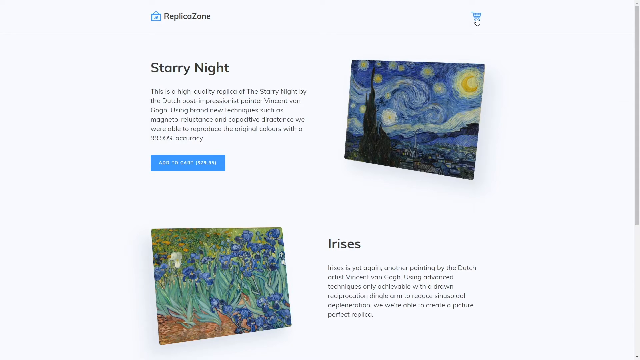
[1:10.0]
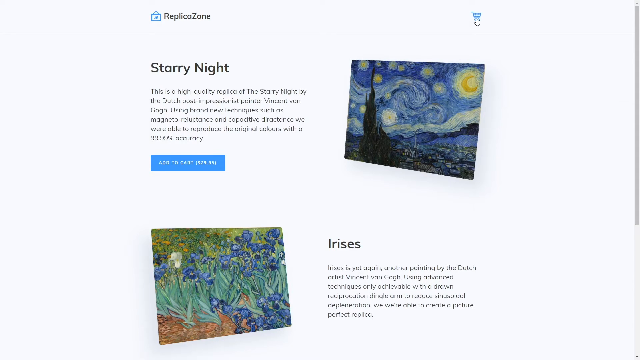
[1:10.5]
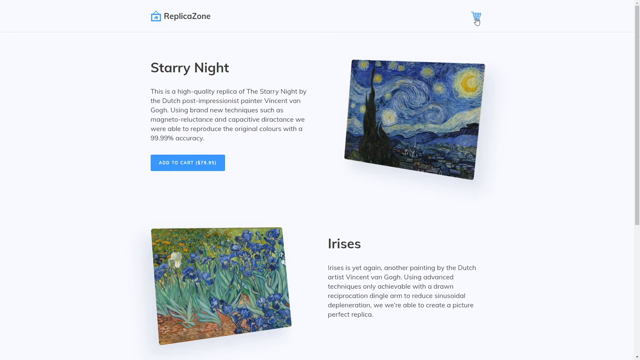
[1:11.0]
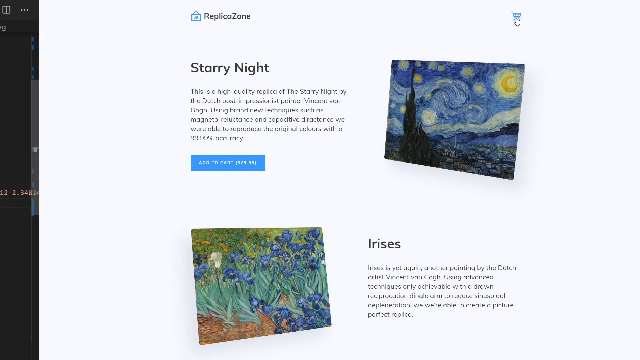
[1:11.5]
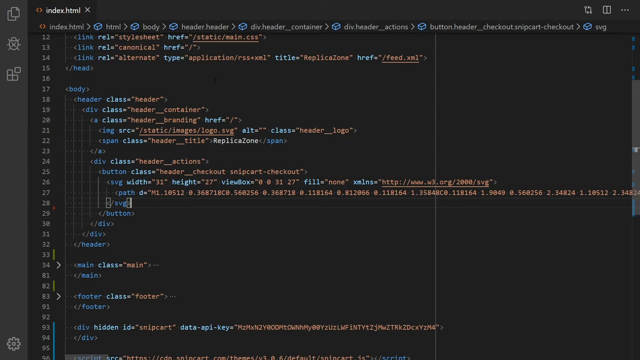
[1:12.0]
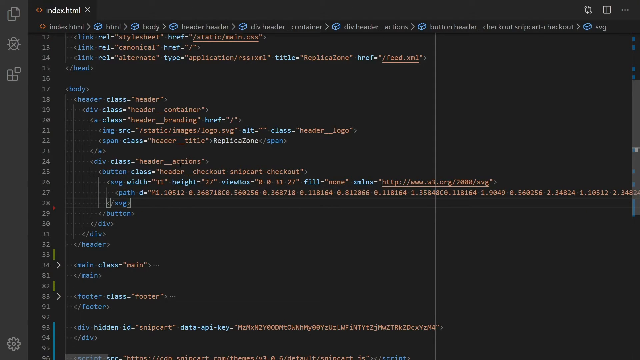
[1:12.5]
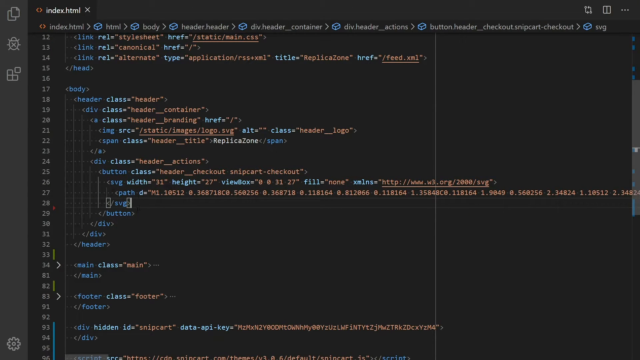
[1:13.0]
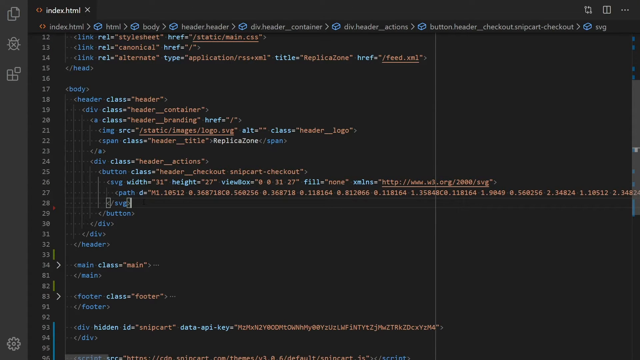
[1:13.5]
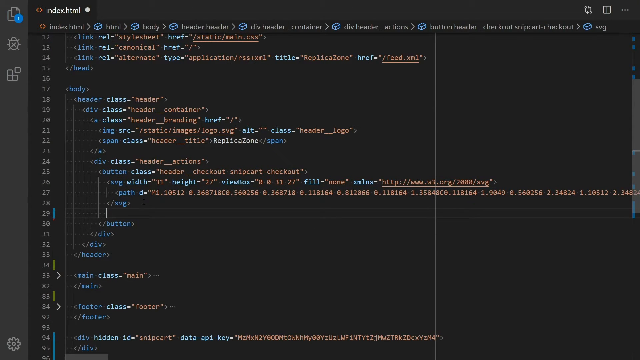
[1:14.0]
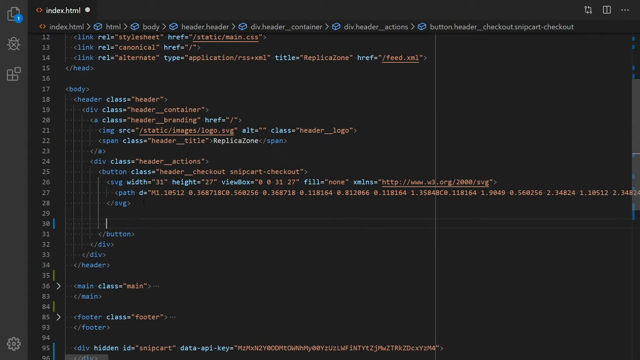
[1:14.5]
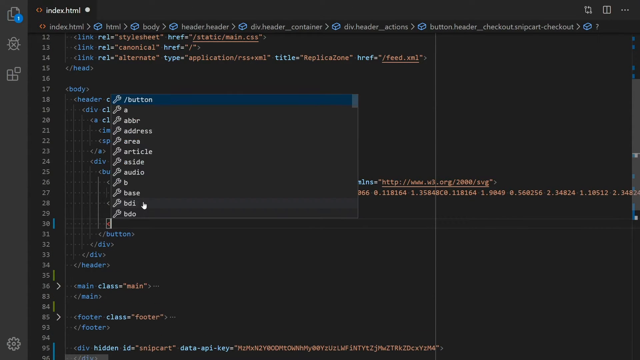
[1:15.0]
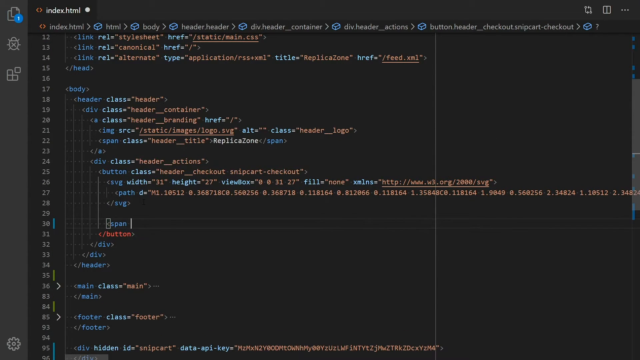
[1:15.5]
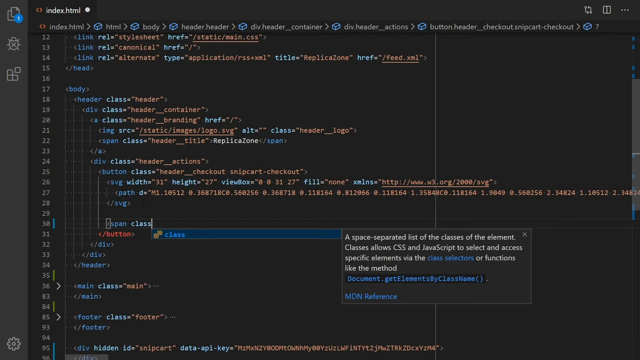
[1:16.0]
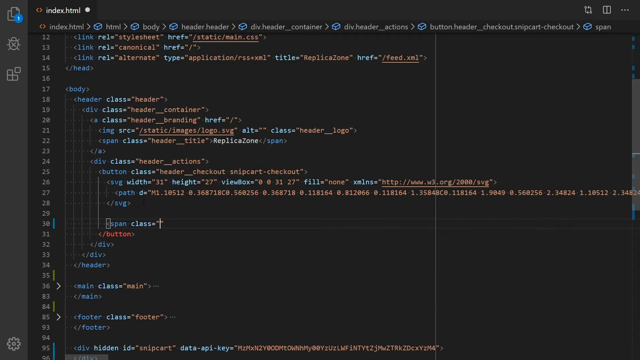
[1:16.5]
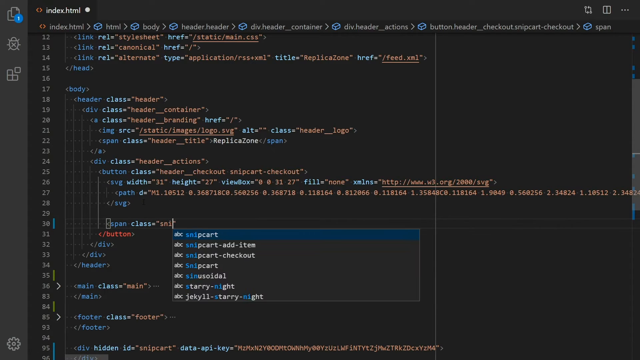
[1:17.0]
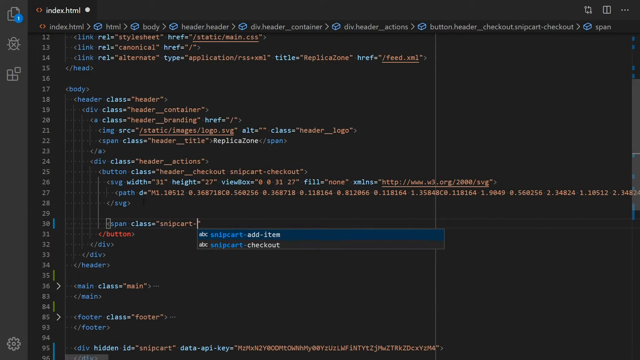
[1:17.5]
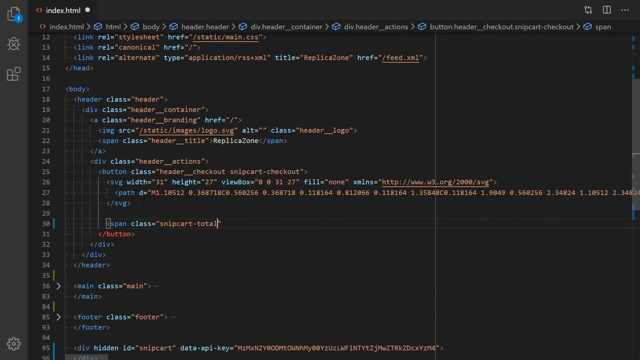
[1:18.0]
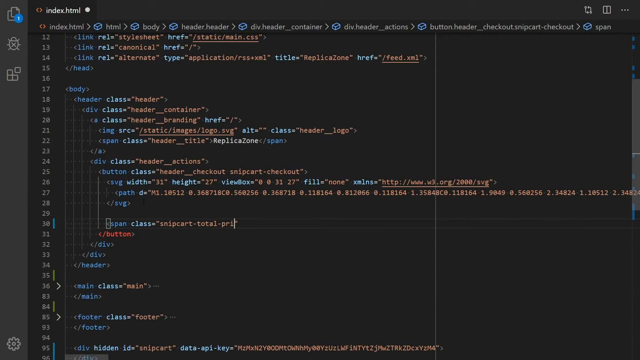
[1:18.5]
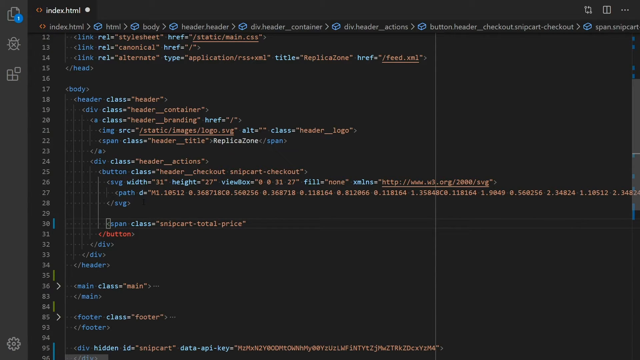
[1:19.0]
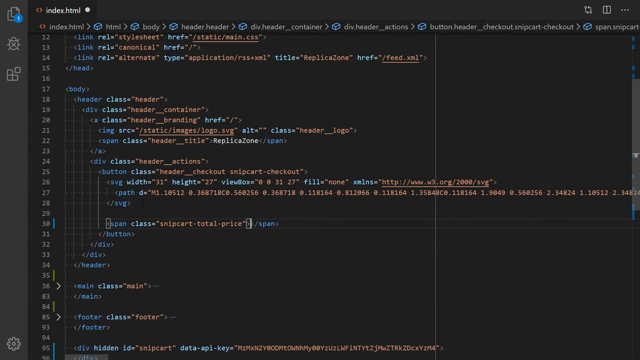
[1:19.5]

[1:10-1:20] The scene begins on the white page with the images of the two paintings, then goes immediately to the black code page. As the cursor moves across the page and letters are typed in, suggested snippets of code come up, with the highlighted part in a lighter blue that stands out from the black background and from the typed code in blue, orange and a slightly lighter yellow. The view goes back to the white page with the two paintings, then returns to the black page, where code is typed in the middle of the screen. Two lines of code are typed, two separate sets of suggested words and code come up, and the top bar of the suggestions is always highlighted in the lighter blue. The view then comes back to the white page with the two paintings, where the hand cursor is still poised on the little blue shopping cart in the top right section of the page.